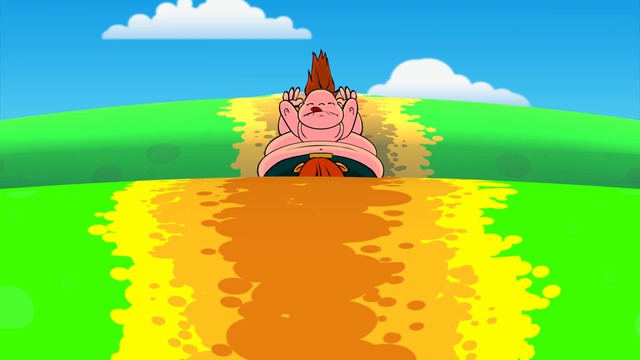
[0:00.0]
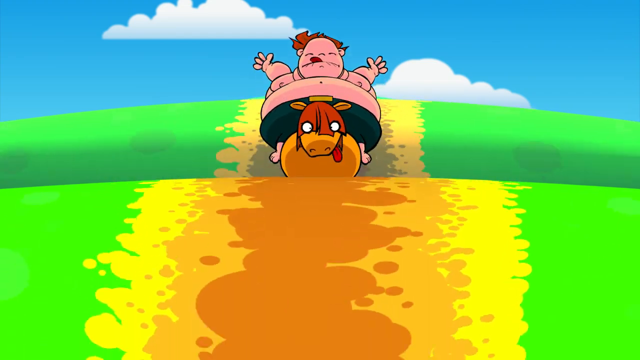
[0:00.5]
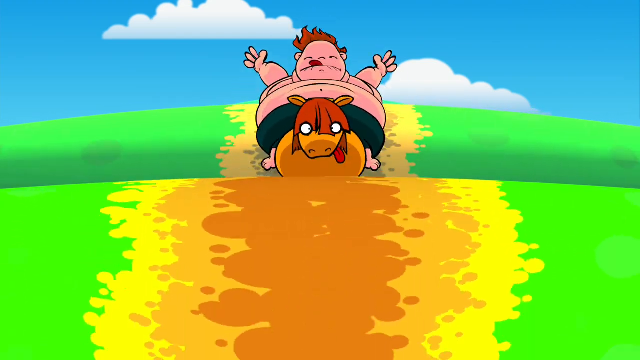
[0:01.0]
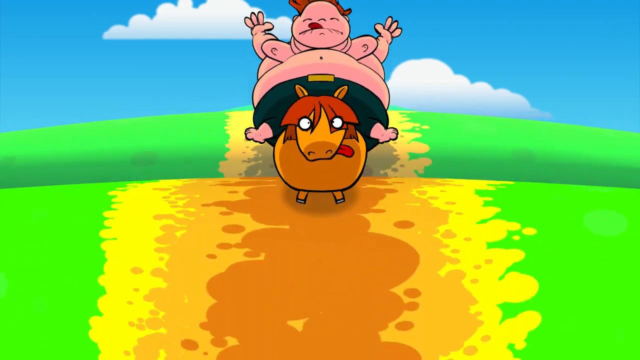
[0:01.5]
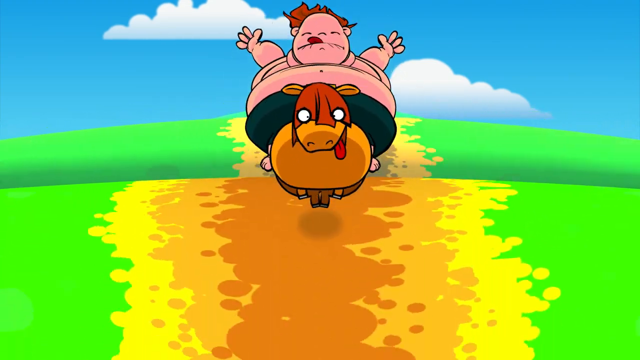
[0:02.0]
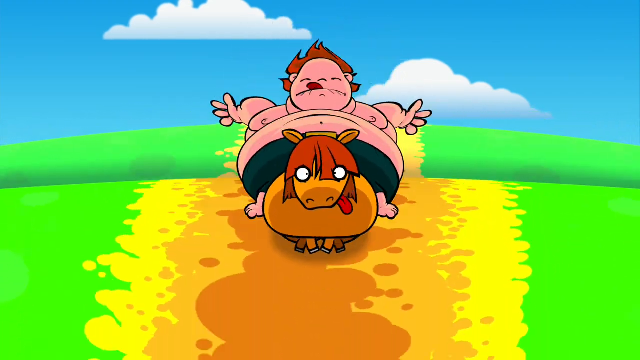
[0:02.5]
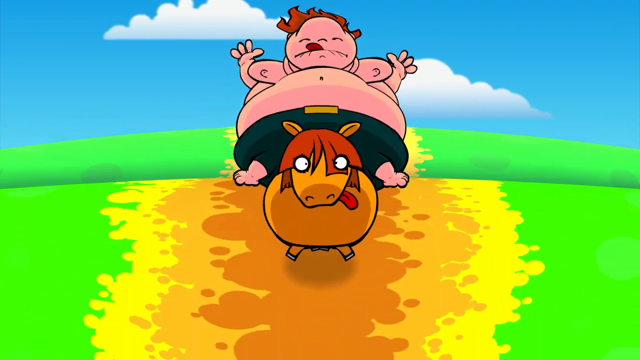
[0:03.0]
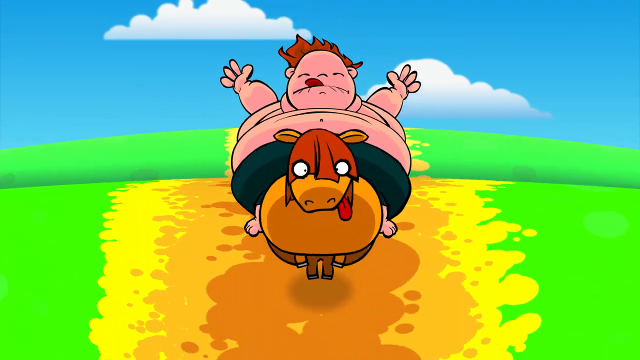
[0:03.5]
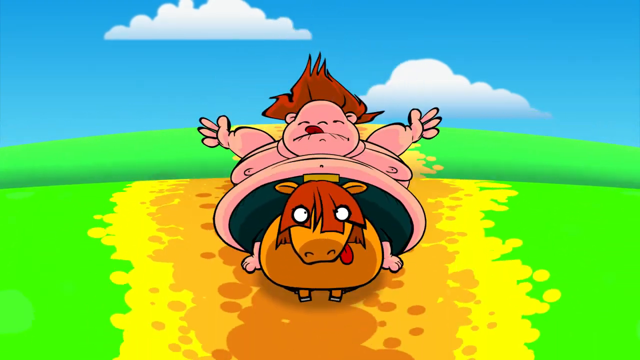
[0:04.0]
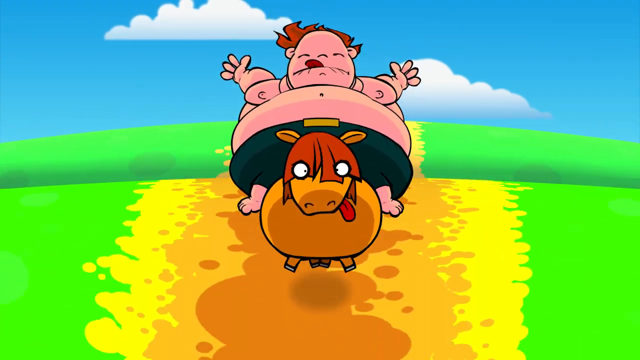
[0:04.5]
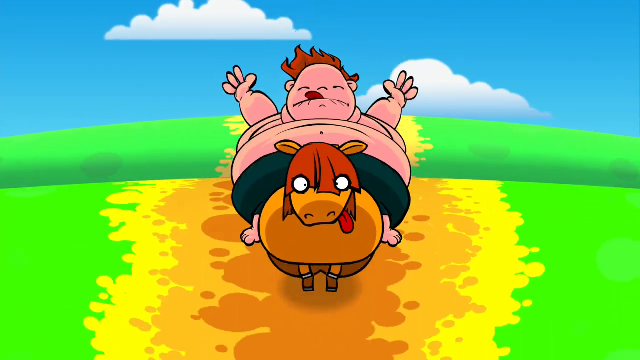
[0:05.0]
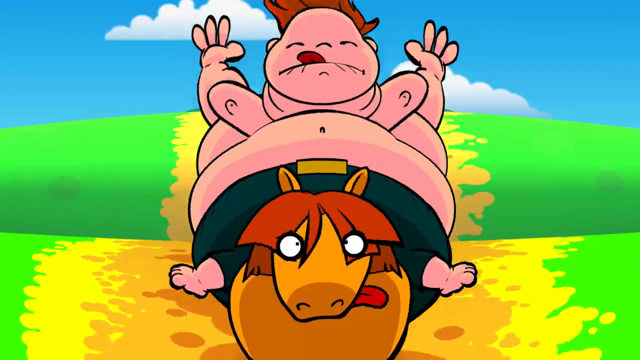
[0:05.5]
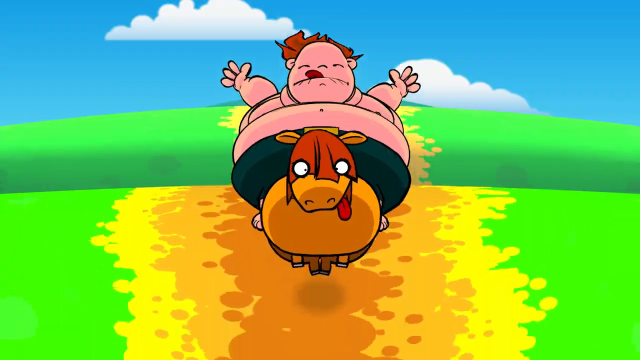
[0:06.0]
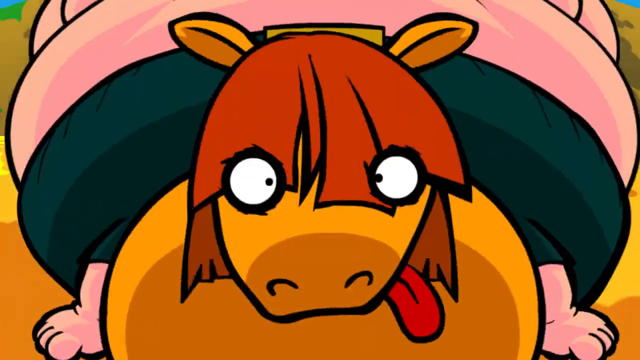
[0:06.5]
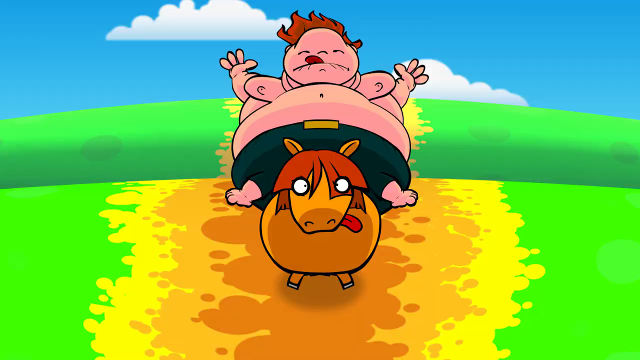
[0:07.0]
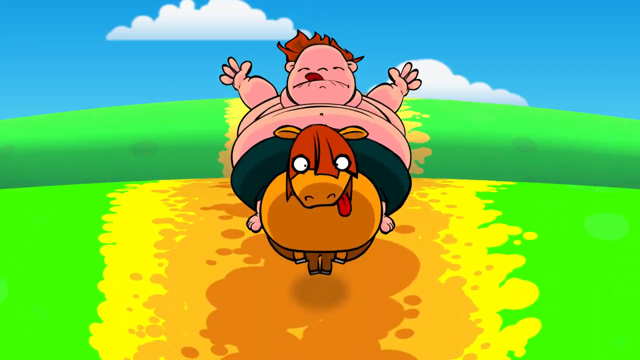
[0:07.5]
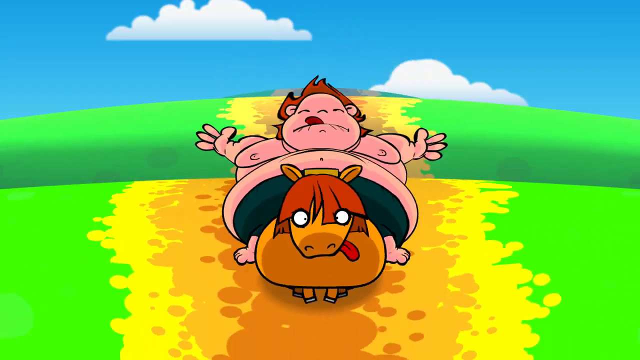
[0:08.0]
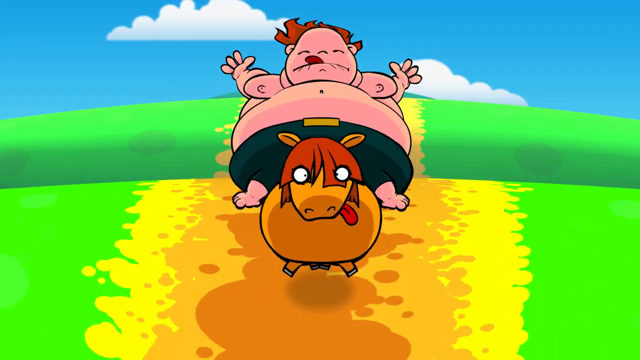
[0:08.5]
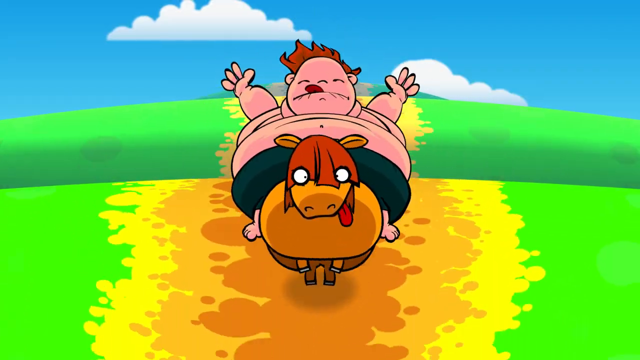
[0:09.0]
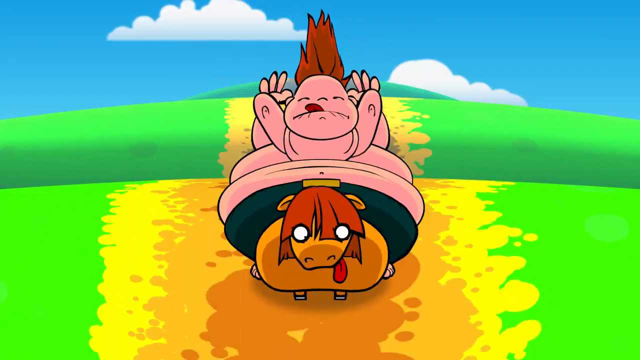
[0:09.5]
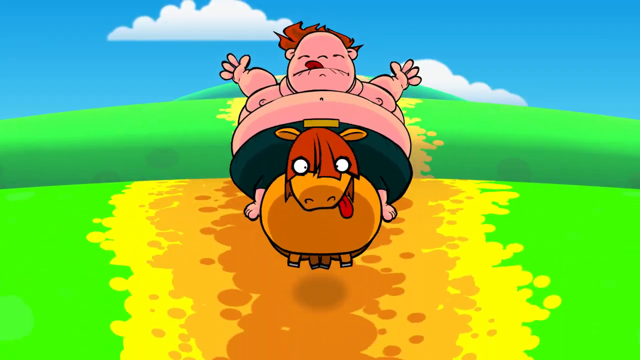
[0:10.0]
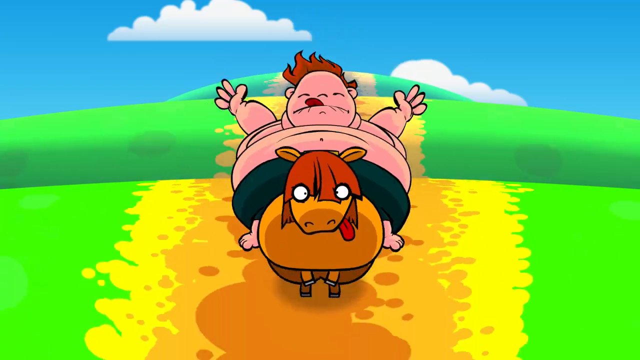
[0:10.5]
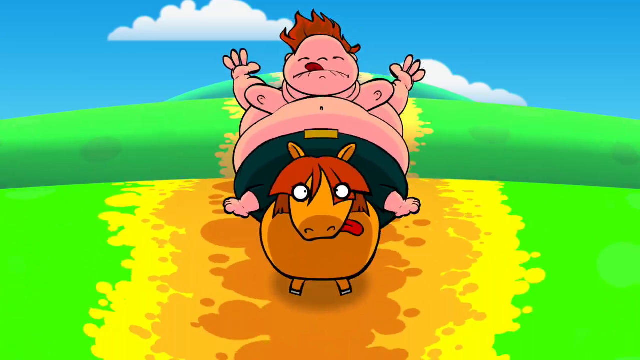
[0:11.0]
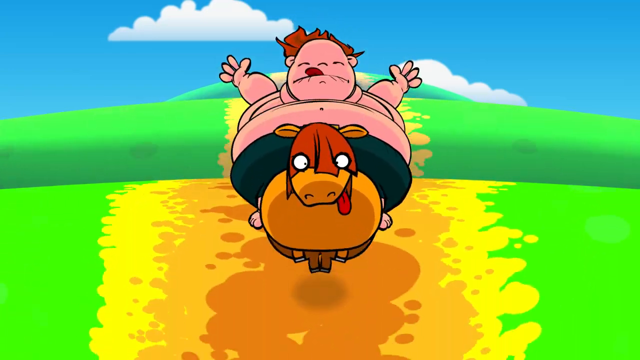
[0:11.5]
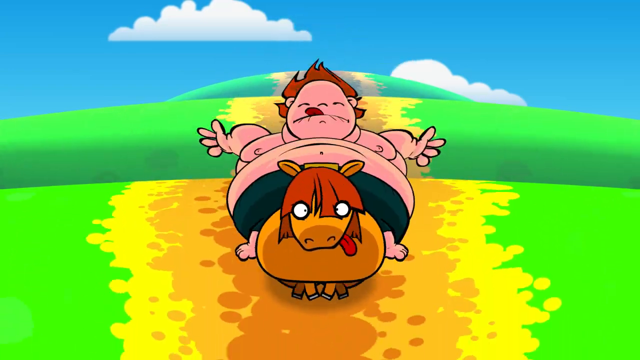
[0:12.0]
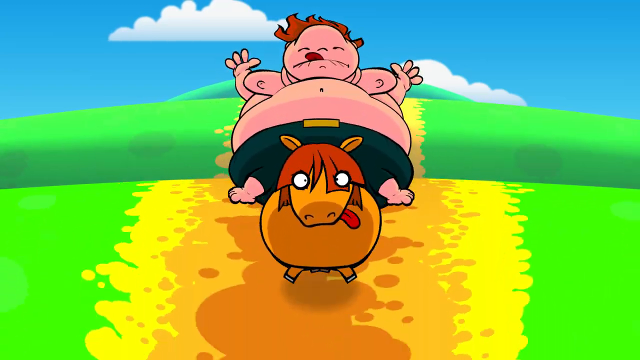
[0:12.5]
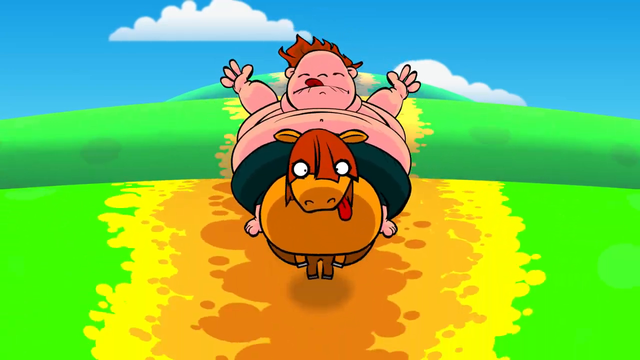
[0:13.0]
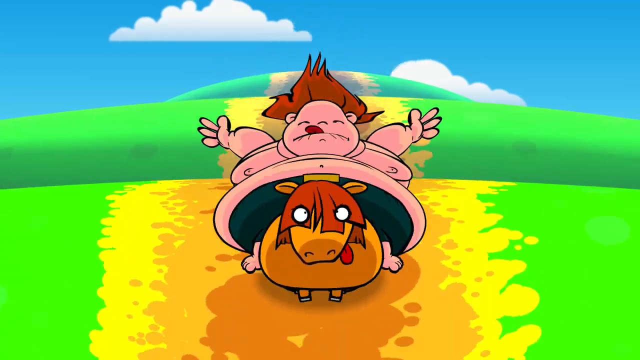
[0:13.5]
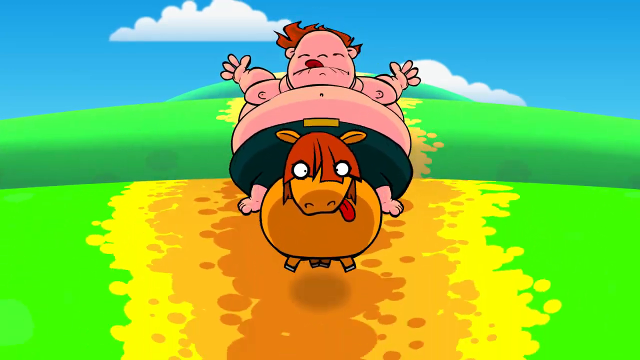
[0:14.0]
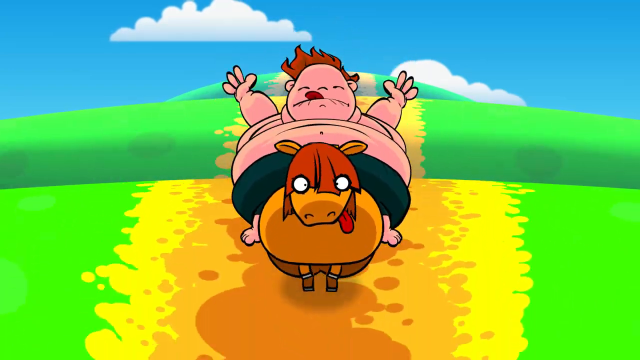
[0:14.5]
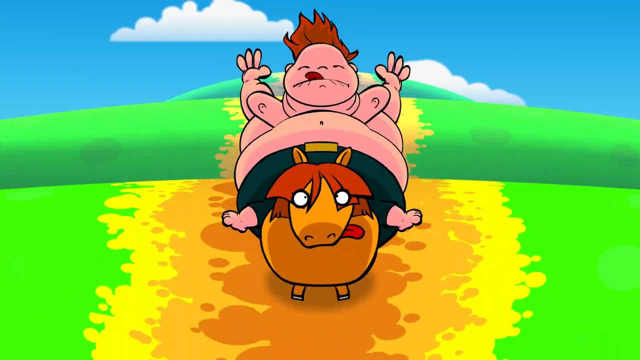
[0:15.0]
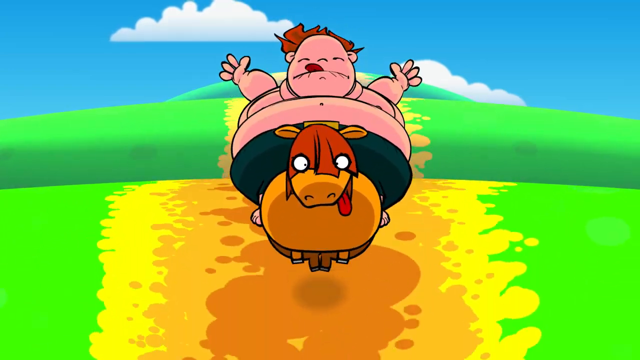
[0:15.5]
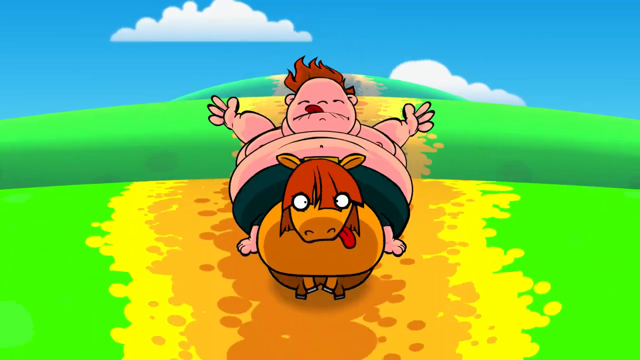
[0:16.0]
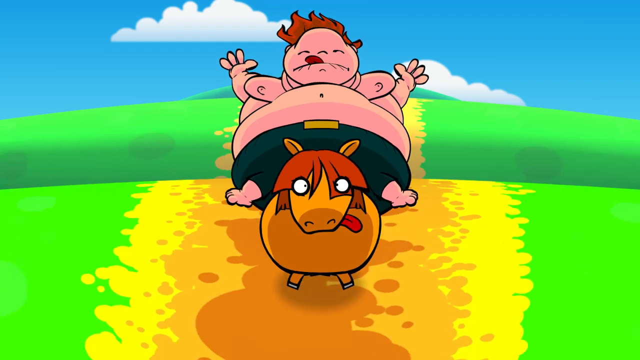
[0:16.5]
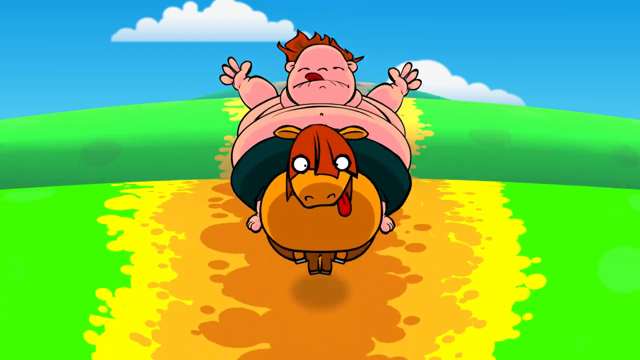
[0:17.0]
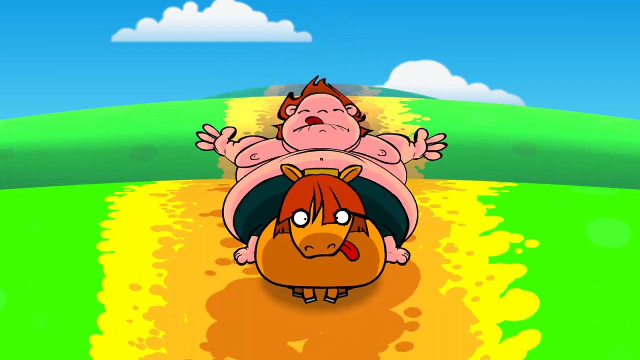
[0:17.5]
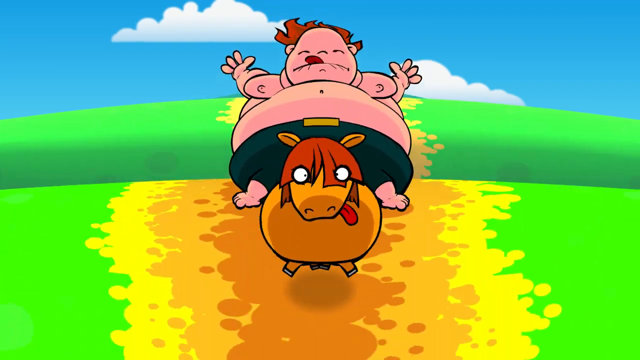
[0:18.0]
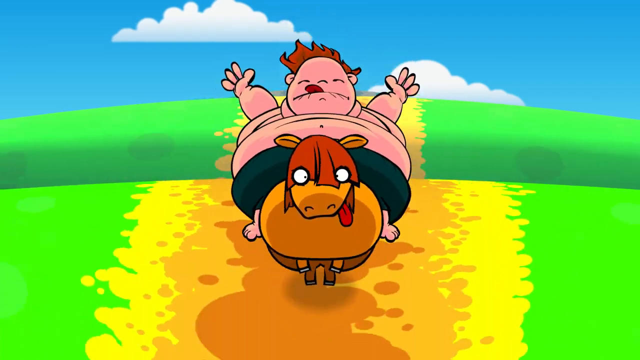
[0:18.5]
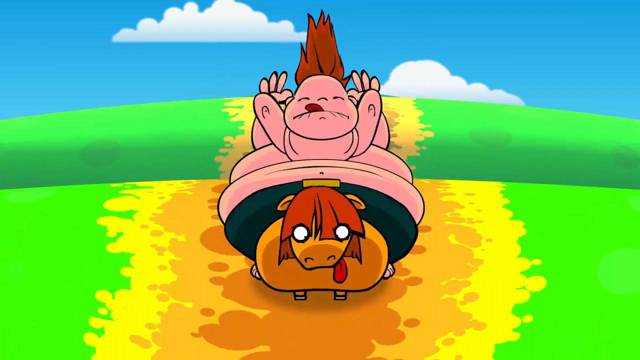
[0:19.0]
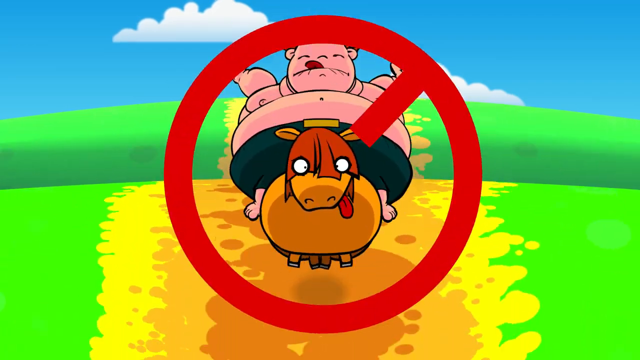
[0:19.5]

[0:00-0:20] An animation shows a child riding a cow. The cow is brown, with a darker brown spot on its chest, its nose and part of its body. It has hair on its head like human hair, shaded dark brown, two ears and four legs, and it runs fast toward the viewer with its eyes wide open, in a bouncy run. The child on top is a bit overweight; he wears only a black shirt, is shirtless, and has brown hair like the cow. He rides with his hands wide open and his tongue out, enjoying the ride. The background is a mountain that is green on either side, followed by yellow, brown and dark brown; the dark brown is the pathway the two are traveling along. The sky is clear, with only two white clouds visible.